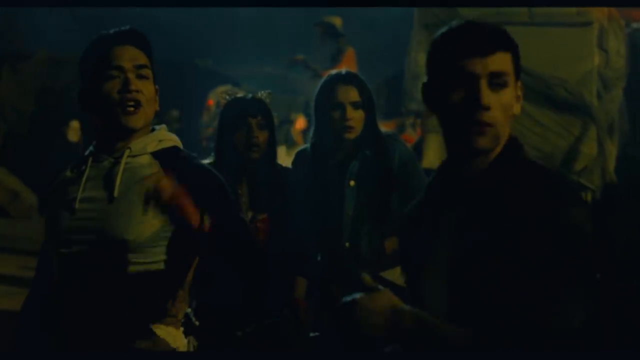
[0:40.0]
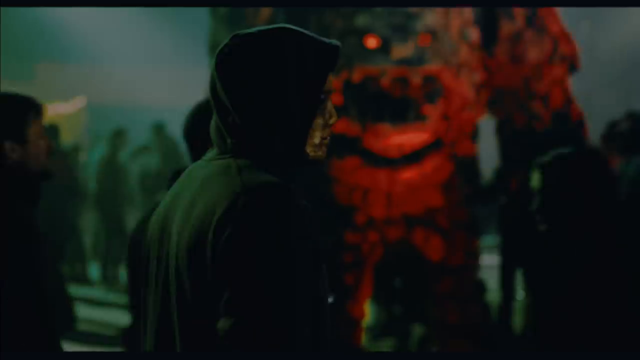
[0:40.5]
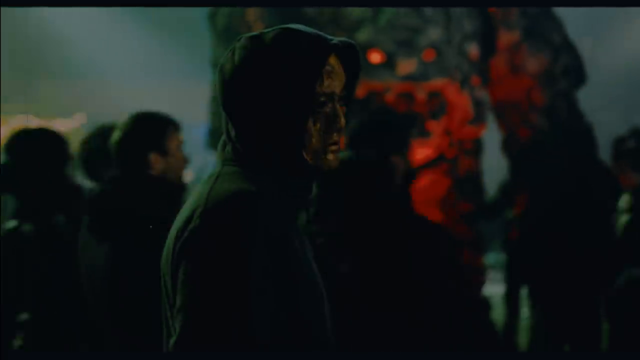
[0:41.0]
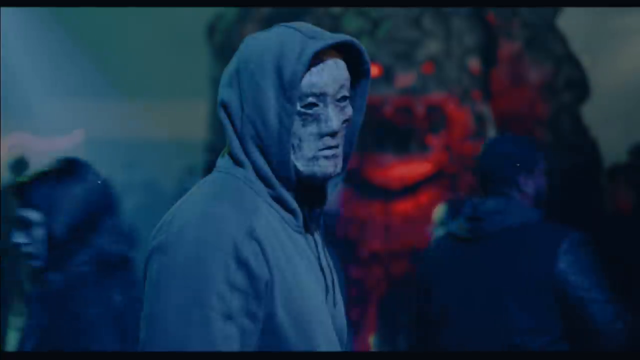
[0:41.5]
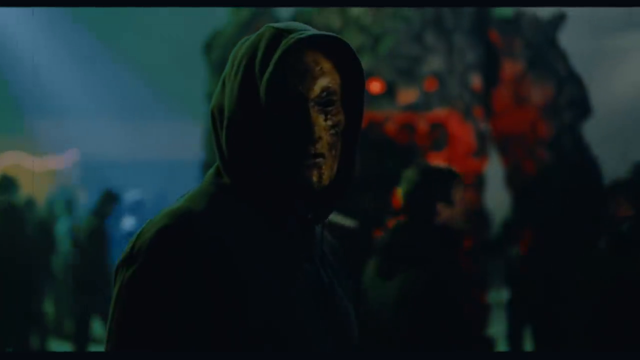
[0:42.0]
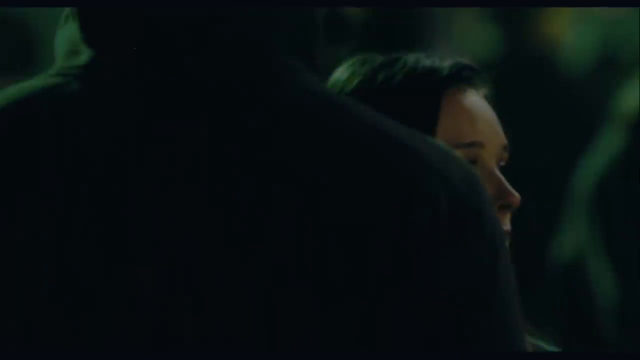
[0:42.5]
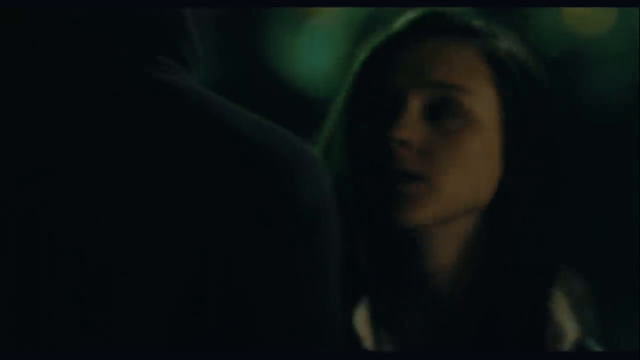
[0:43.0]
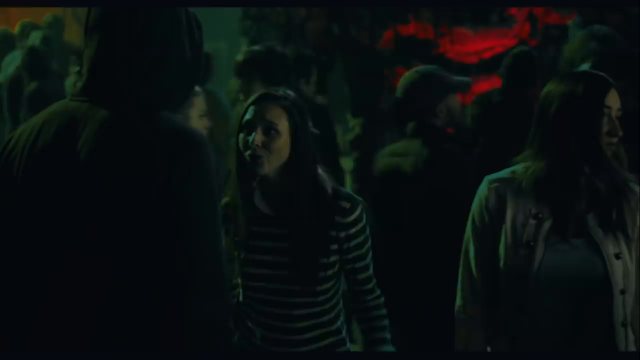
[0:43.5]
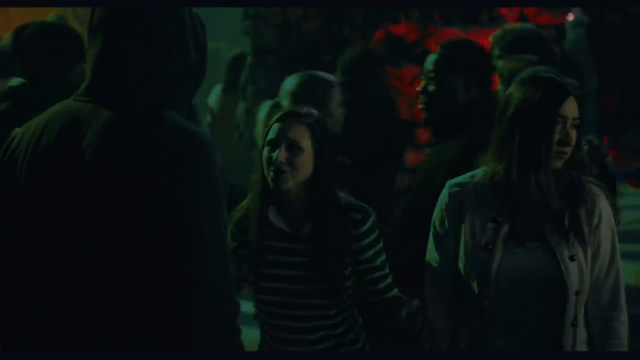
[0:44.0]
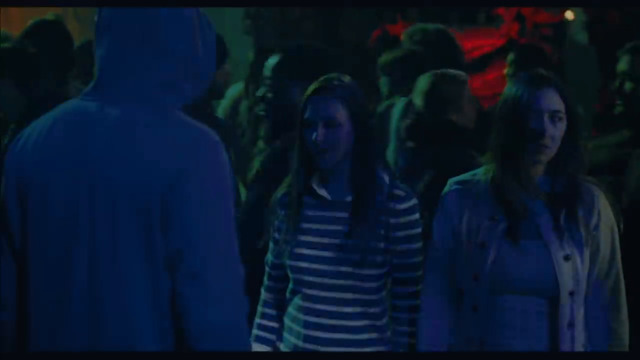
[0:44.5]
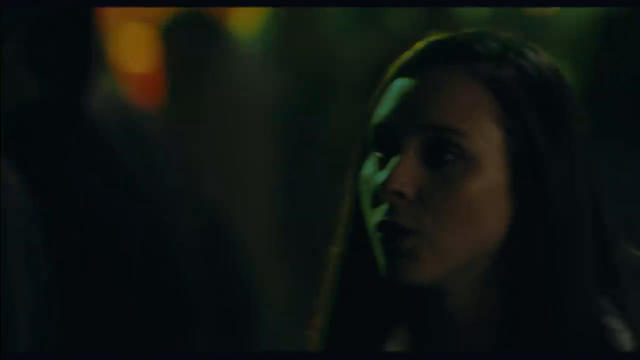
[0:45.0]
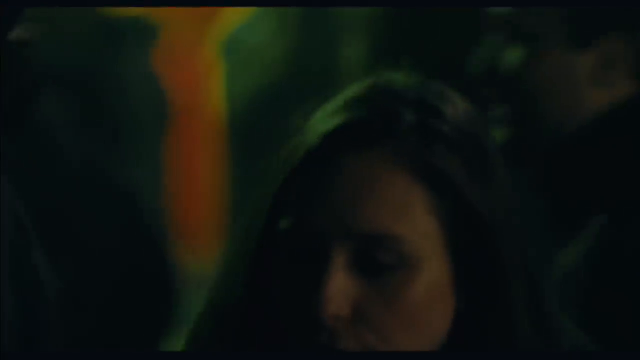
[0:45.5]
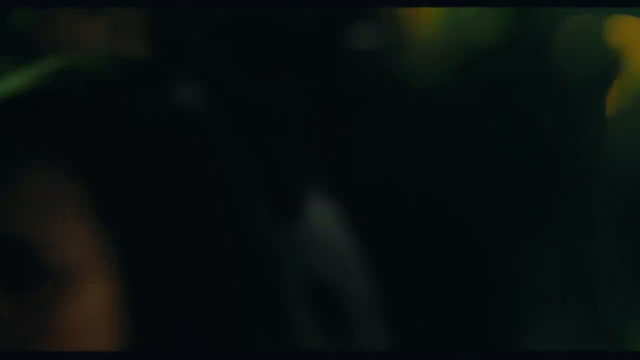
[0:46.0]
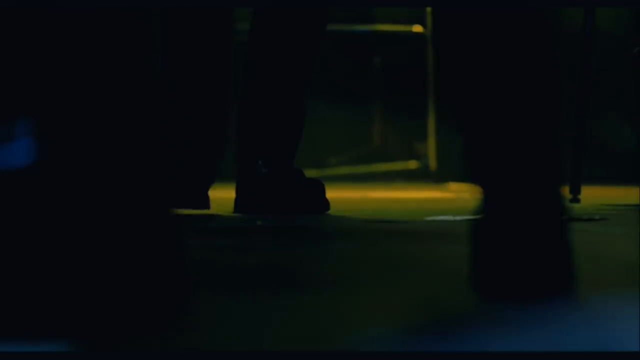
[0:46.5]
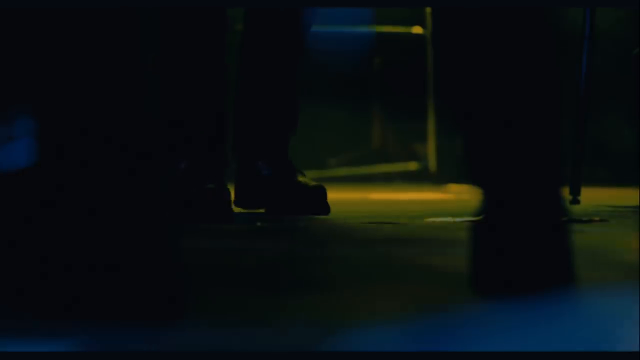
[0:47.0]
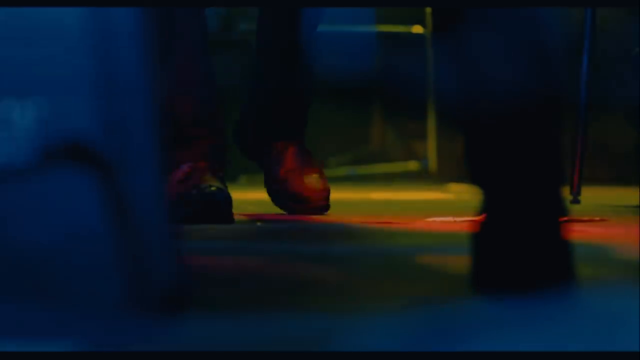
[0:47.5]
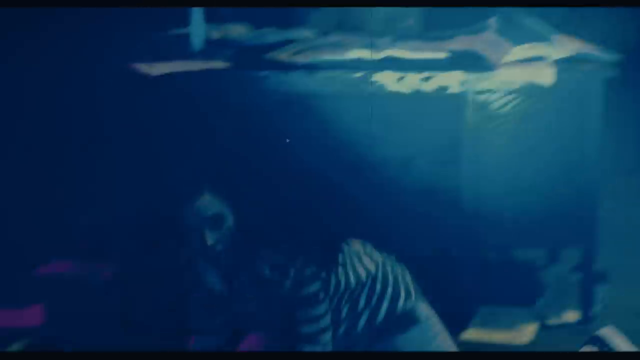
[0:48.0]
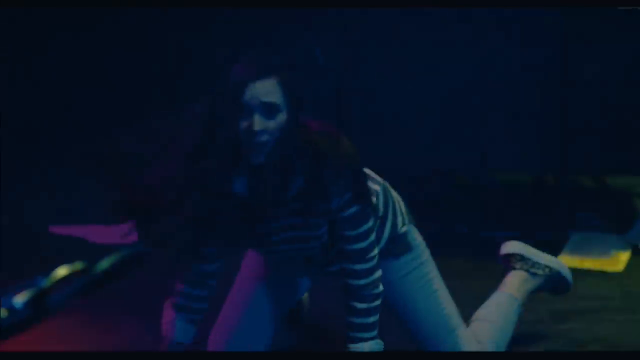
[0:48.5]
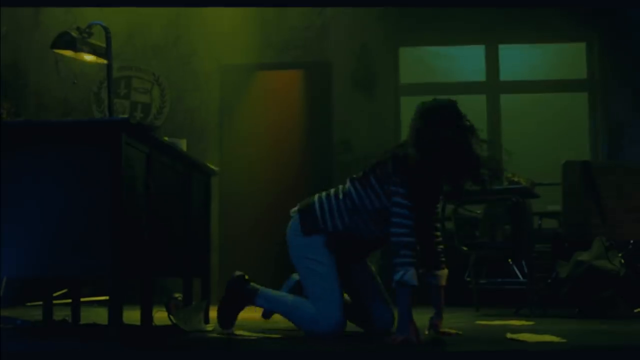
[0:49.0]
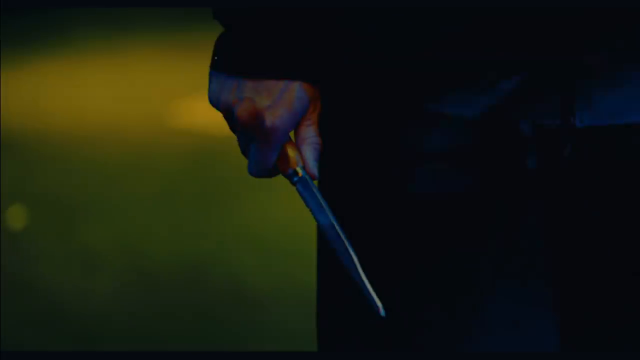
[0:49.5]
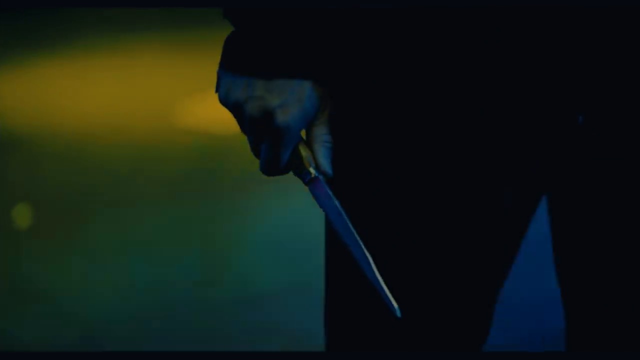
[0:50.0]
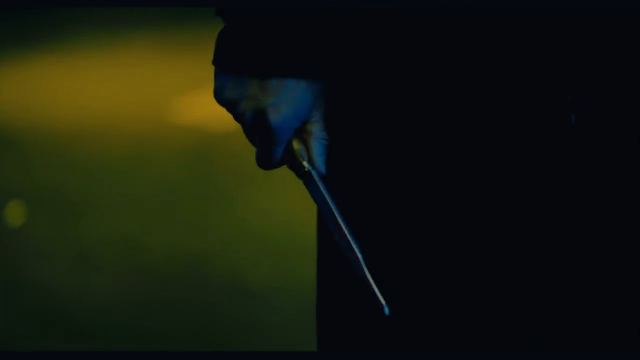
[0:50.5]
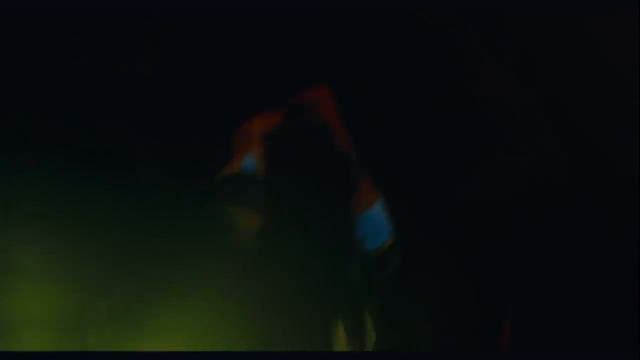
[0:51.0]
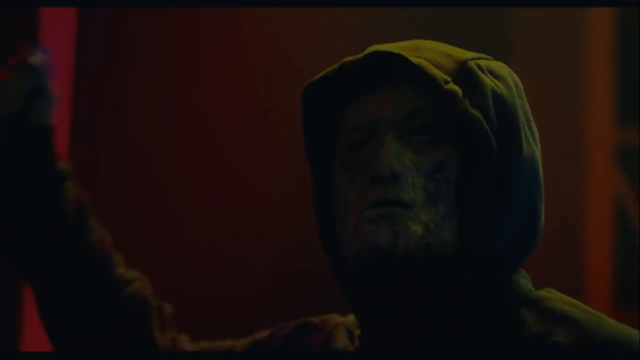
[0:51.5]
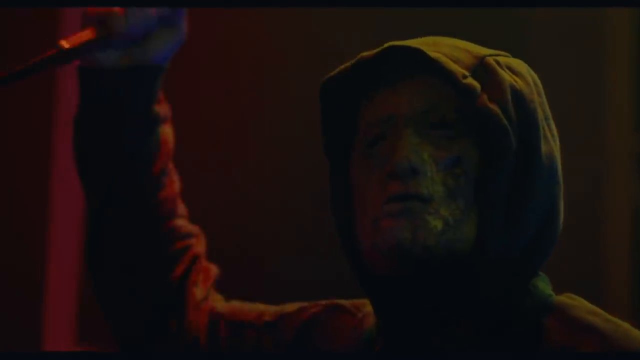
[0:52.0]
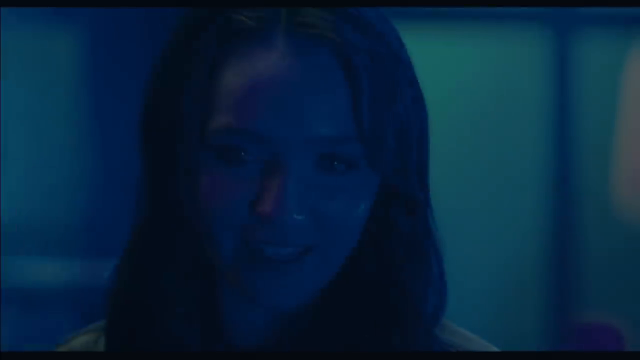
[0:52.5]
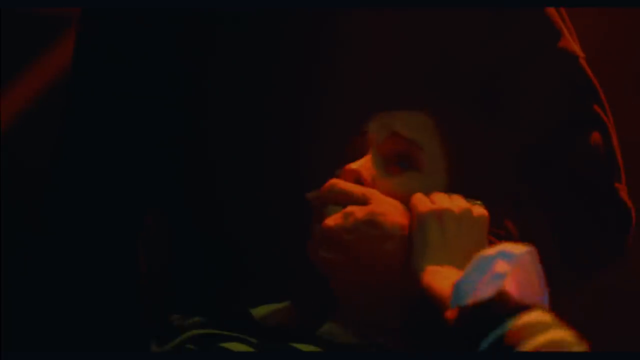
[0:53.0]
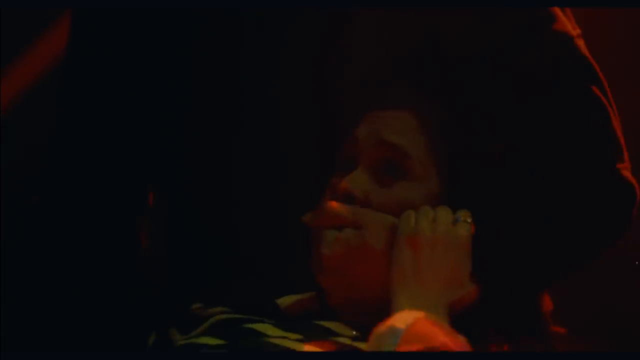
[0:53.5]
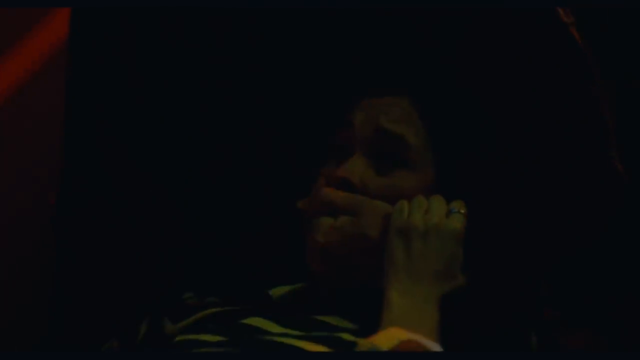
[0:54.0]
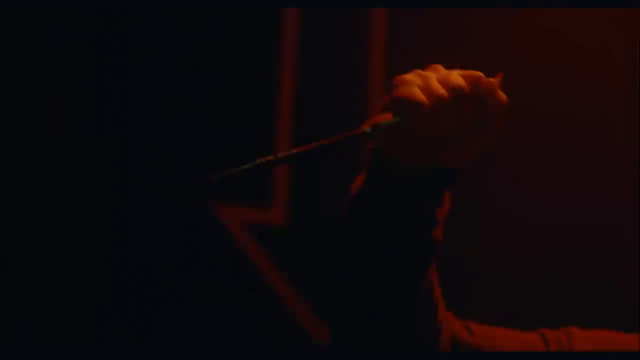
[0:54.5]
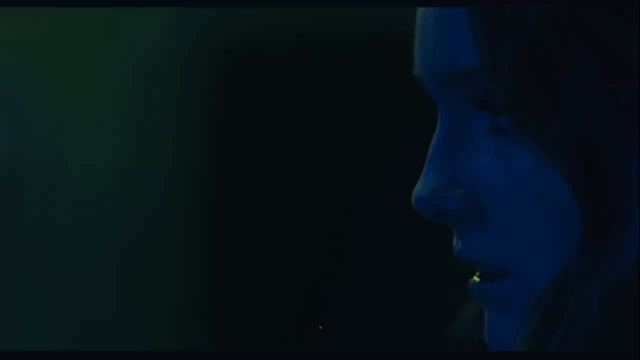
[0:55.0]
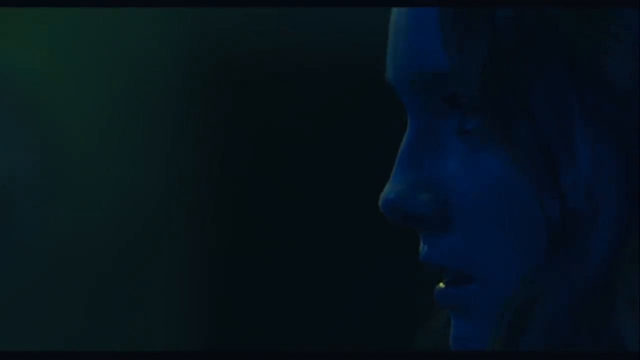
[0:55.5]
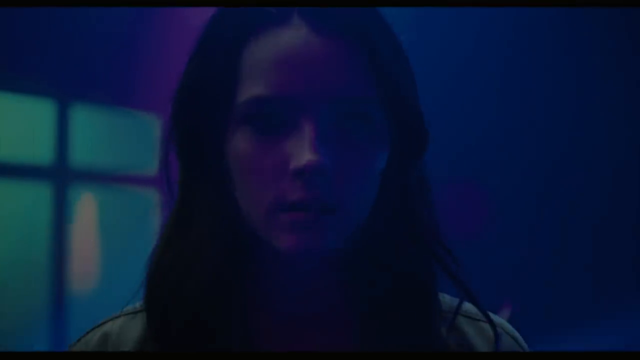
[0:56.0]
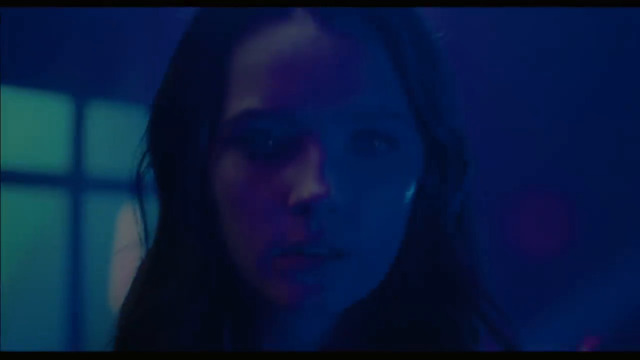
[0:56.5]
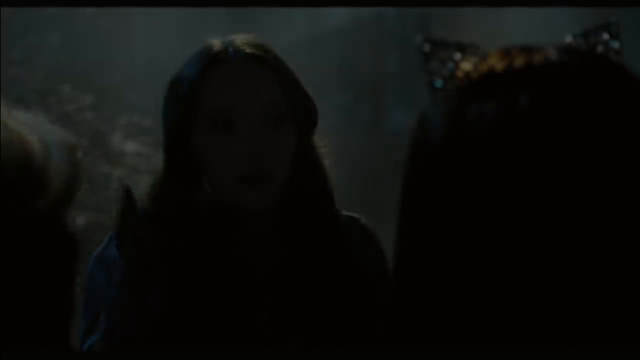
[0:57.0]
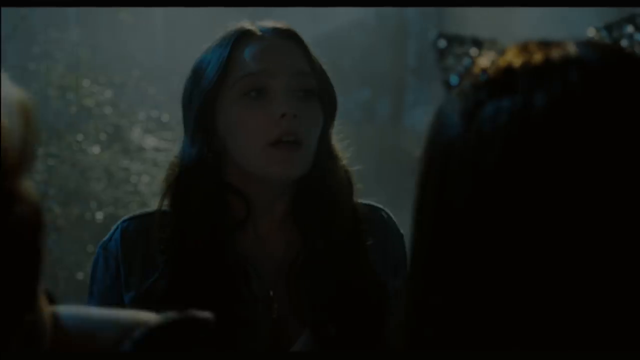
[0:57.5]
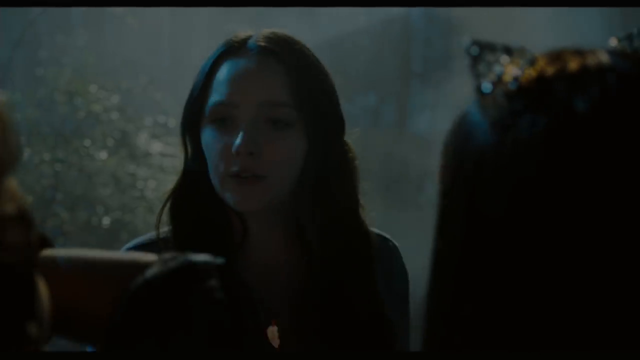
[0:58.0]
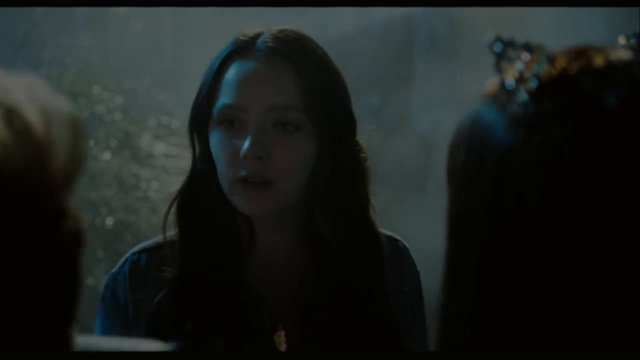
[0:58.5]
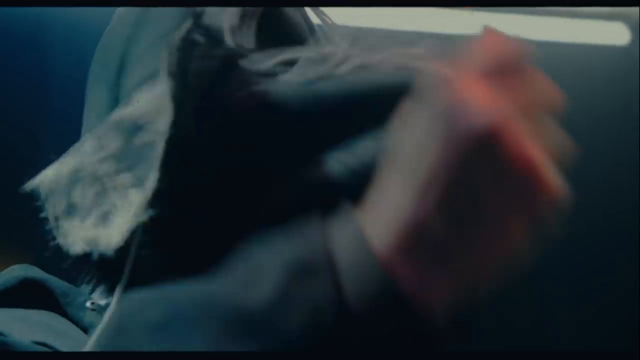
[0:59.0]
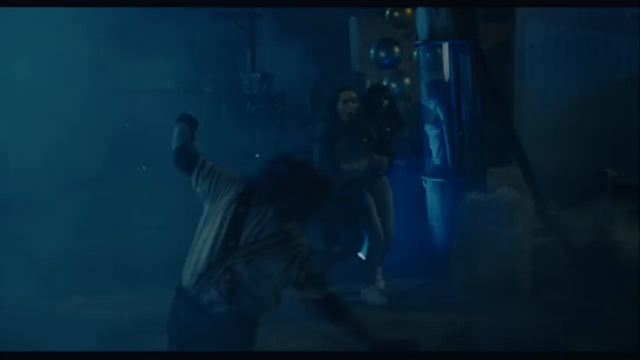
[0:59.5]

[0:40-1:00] The friends have just watched their friend get dragged off by one of the people dressed up, and those left behind have a look of disbelief, as if unsure what to do. A person in a hoodie wearing a scary mask slowly turns around and bumps into a girl, who gets offended and is kind of yelling at him. Someone wearing boots walks slowly. The girl seen earlier is on her hands and knees, looking really scared, while the guy in the hoodie holds a long knife and raises it in the air as if to stab. A girl is shown, then the scene switches to that girl from earlier: his hand is over her mouth and her head is in his armpit as she tries to pull his hand off her mouth, and then he starts stabbing her.